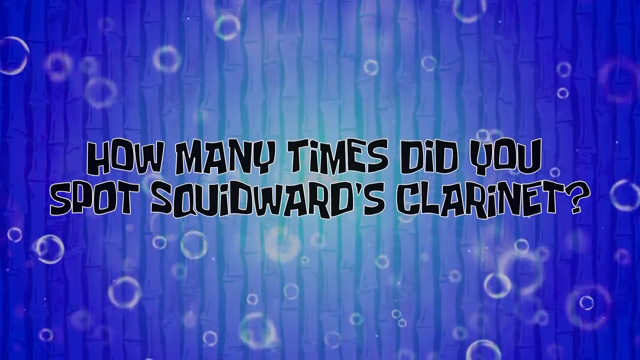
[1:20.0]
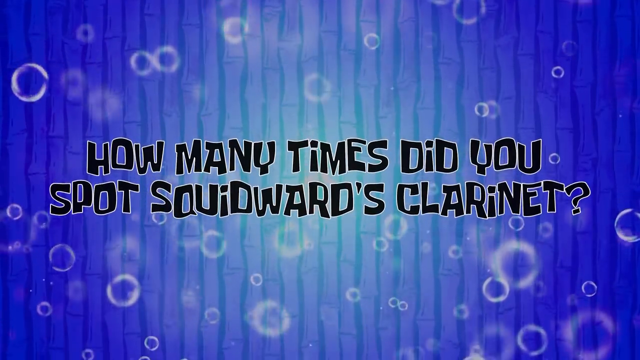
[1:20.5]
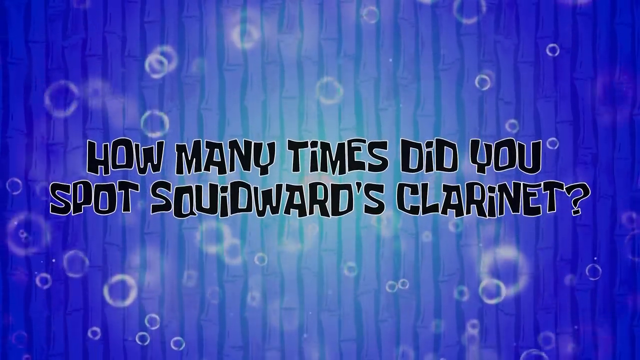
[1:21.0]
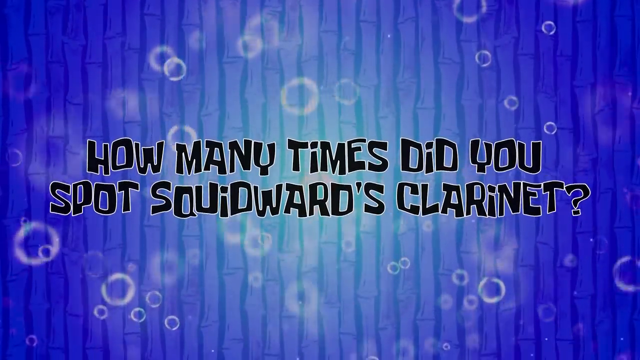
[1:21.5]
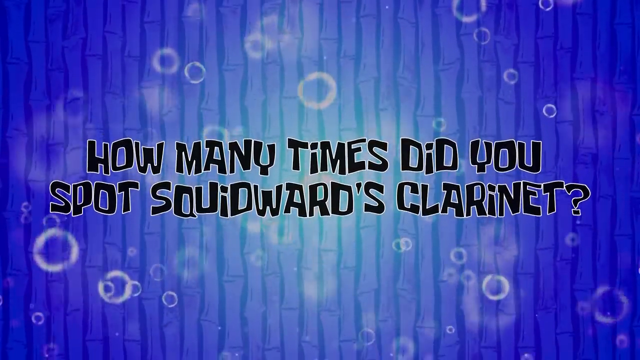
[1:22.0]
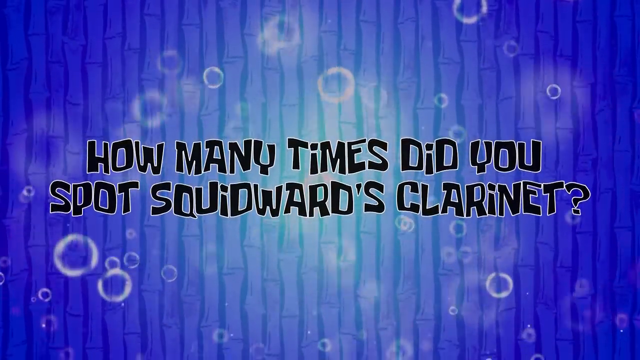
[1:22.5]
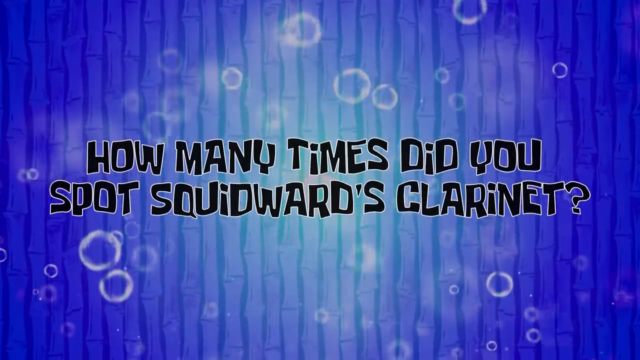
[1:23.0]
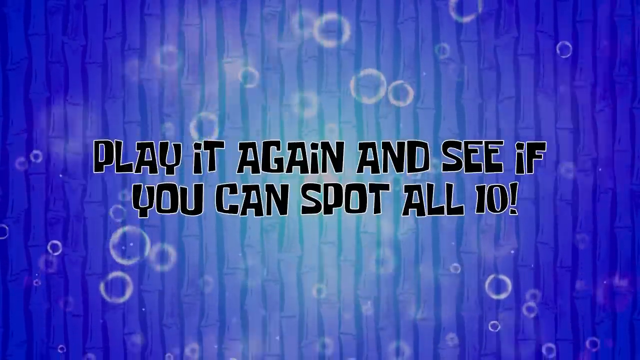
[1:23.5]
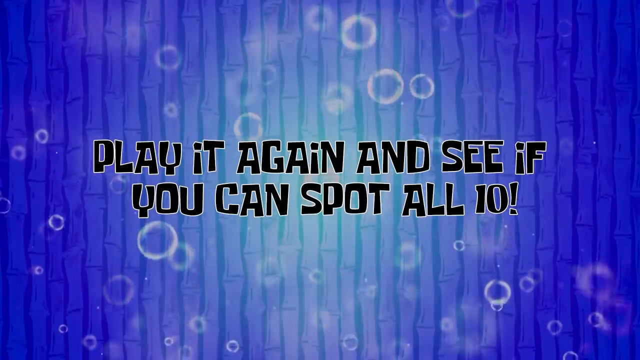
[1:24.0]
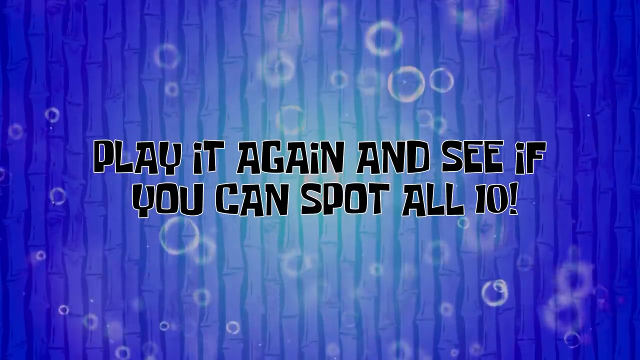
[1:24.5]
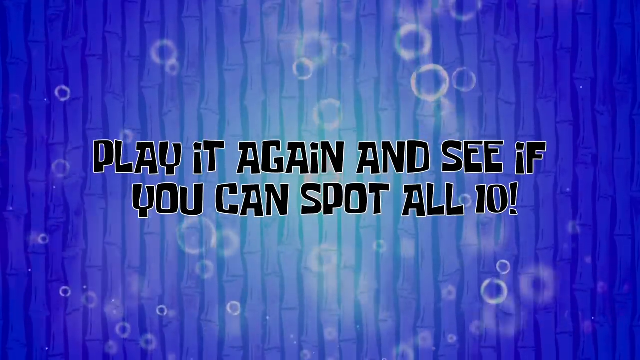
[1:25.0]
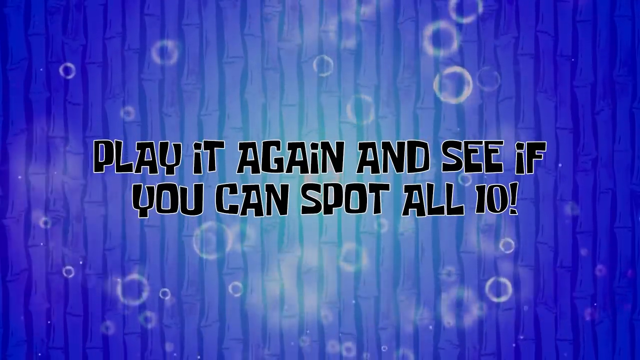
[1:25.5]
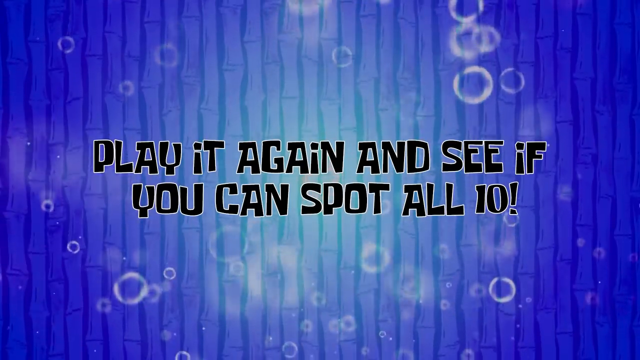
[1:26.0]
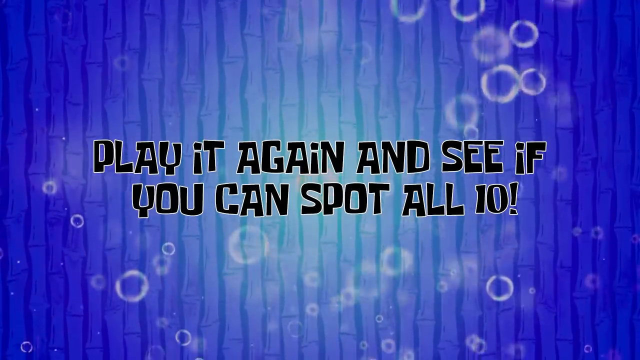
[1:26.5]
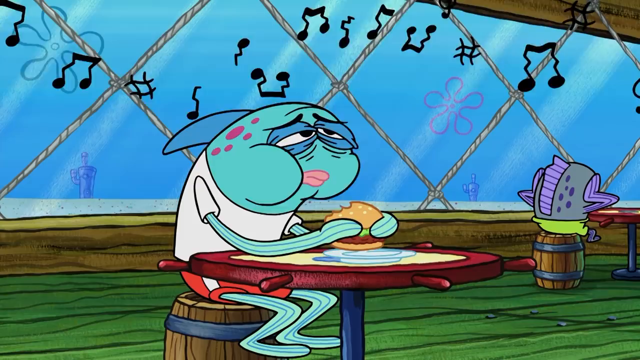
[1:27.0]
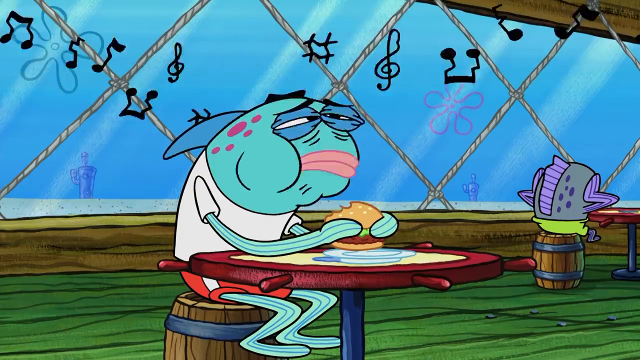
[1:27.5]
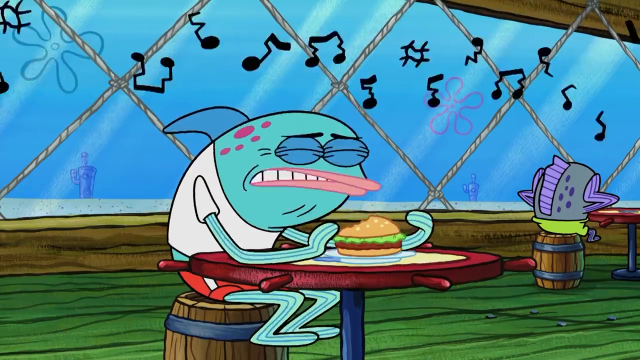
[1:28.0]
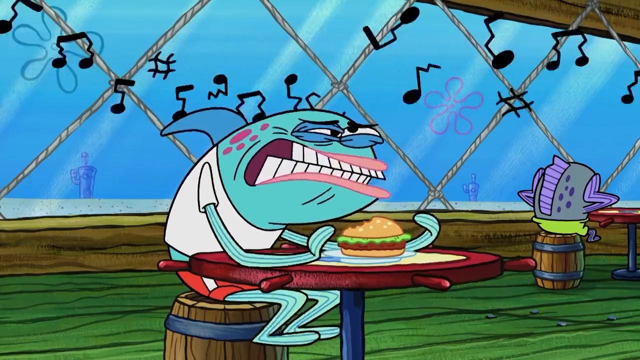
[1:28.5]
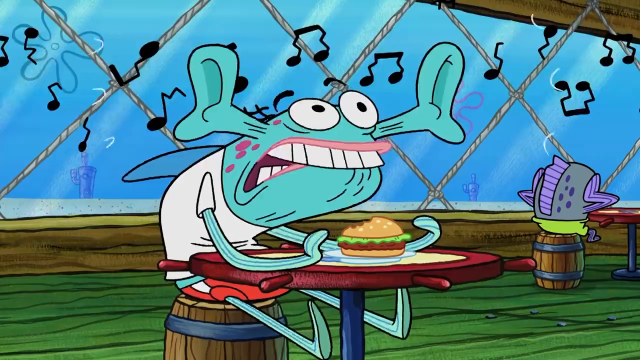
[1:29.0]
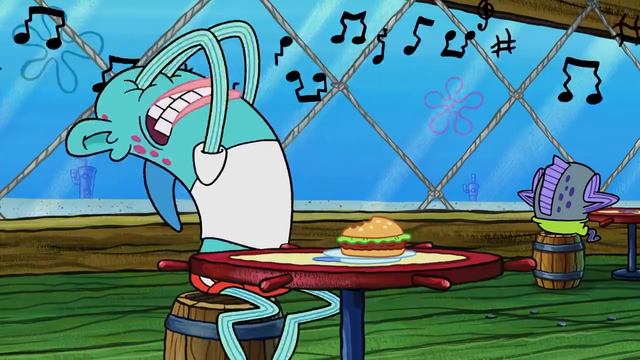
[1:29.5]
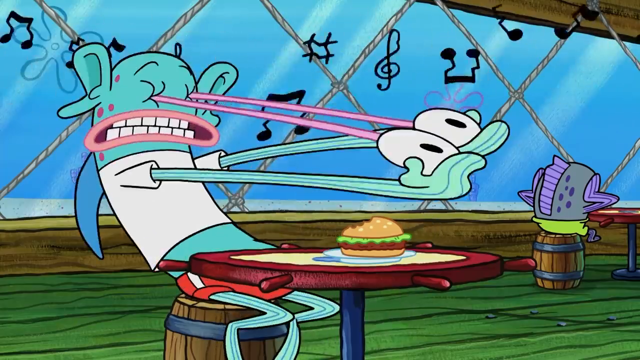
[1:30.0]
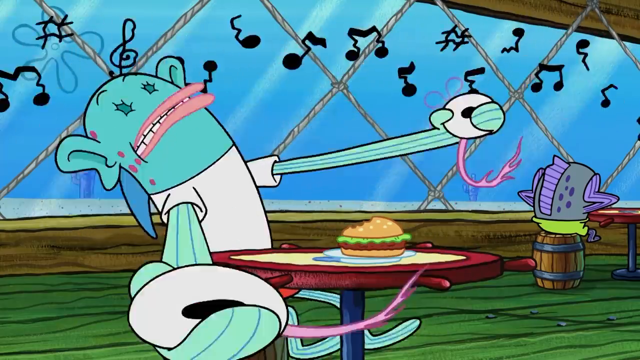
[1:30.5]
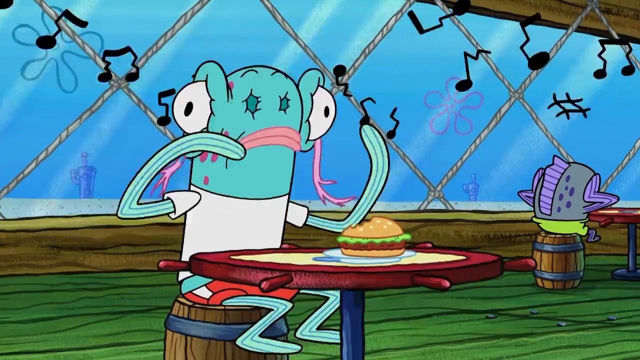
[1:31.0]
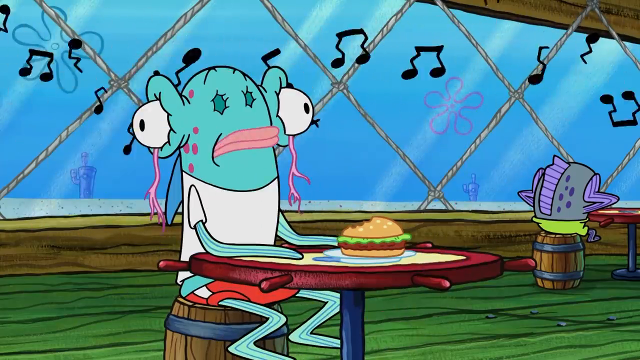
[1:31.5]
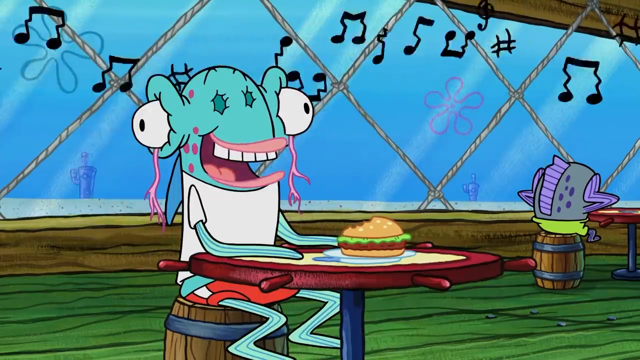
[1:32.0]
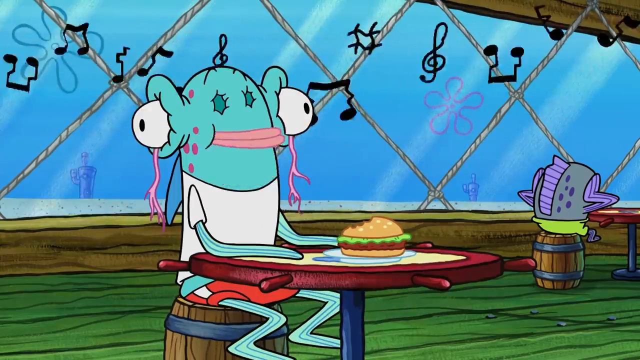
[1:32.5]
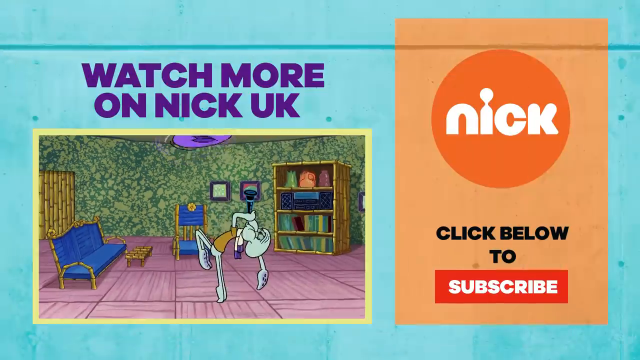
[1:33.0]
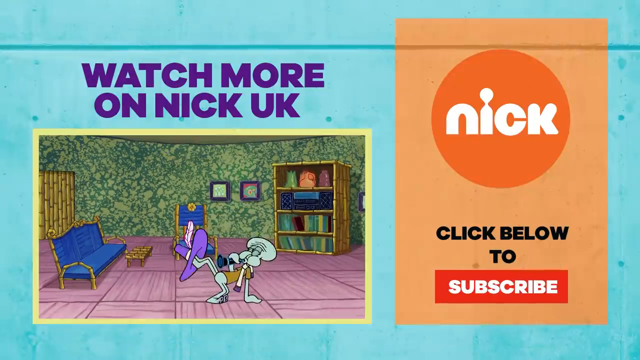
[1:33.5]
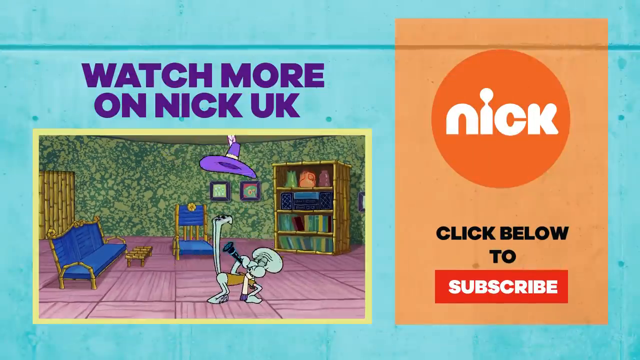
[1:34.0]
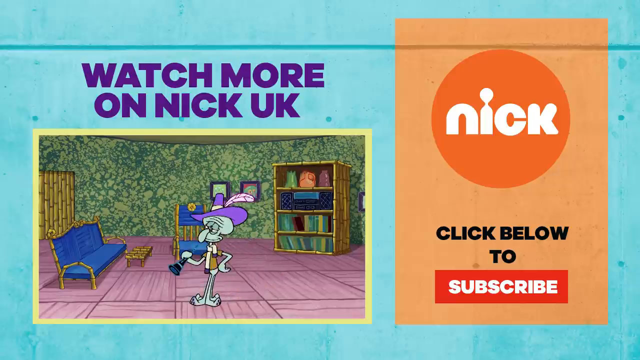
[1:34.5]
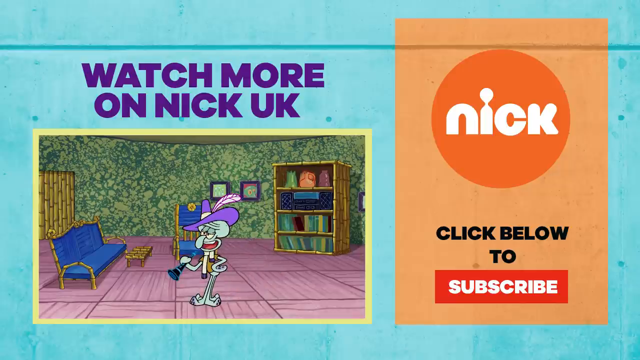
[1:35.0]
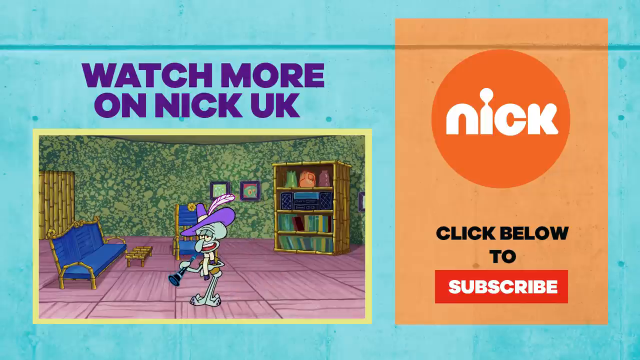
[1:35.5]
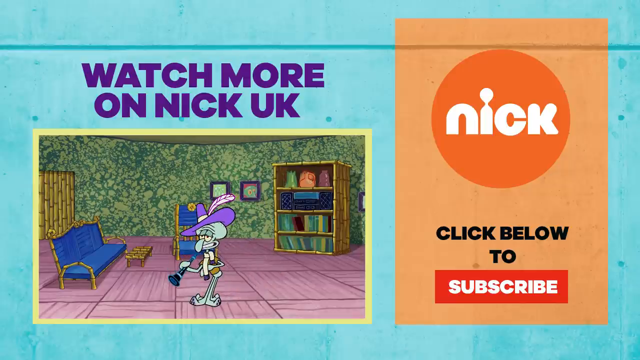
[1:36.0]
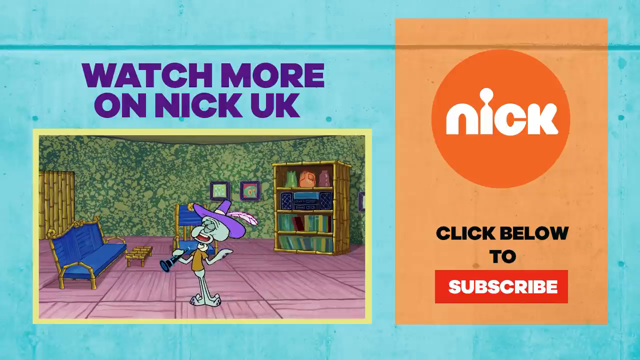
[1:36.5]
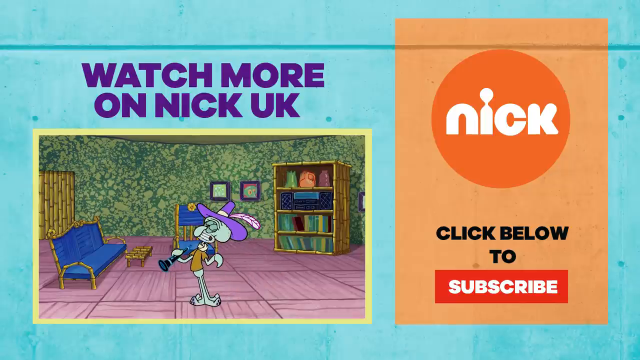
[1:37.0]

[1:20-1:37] A title or transition screen reads "how many times did you spot Squidward's clarinet?" in black font on a blue background, with some vertical lines like bamboo shoots and little white bubbles floating from the bottom of the screen or in all directions. It then cuts to new text saying "play it again and see if you can spot all 10." After a few seconds, it cuts to a man eating a burger in a restaurant, with musical notes floating by outside the window behind him. He reacts as if to not hear the music anymore and seems happy with himself. It then cuts to a promotional screen for Nick. On the right, "Nick" appears in white font inside an orange circle, with "click below to subscribe" below it. On the left is a shot from the episode of Squidward with his clarinet in his hand, wearing a purple hat with a pink feather in it, and above it is "watch more on Nick UK" in purple font.